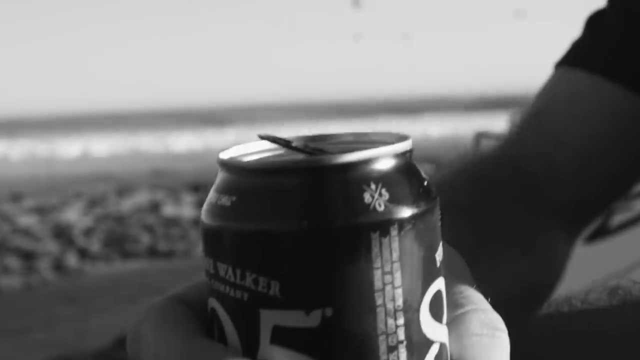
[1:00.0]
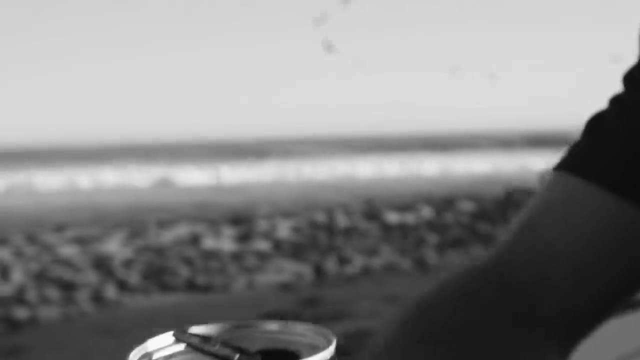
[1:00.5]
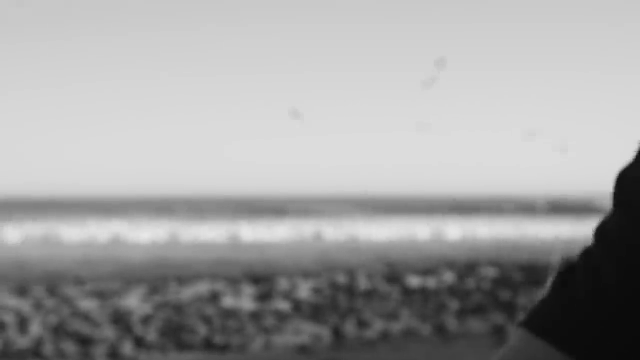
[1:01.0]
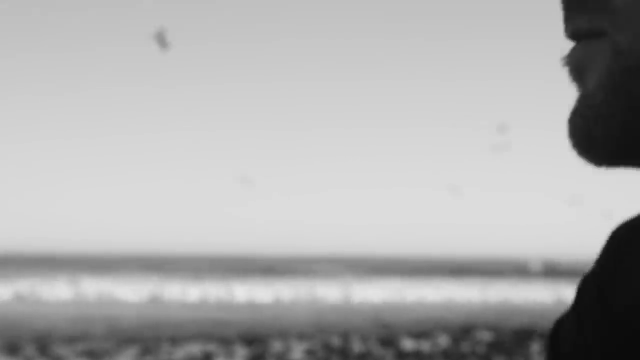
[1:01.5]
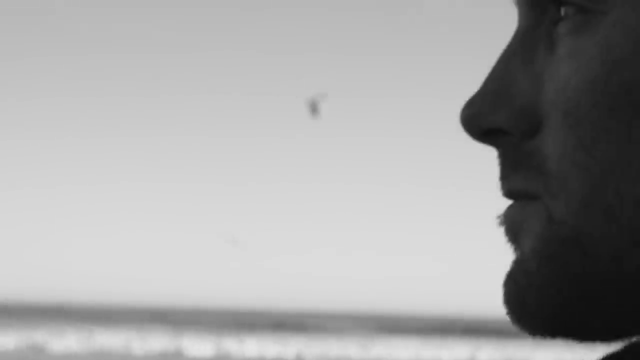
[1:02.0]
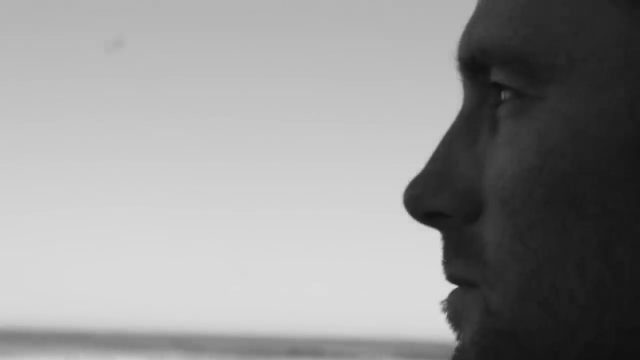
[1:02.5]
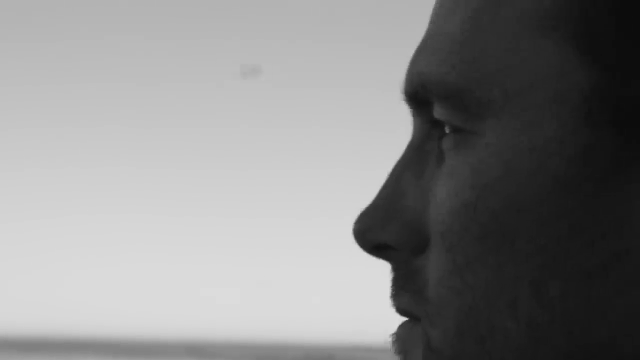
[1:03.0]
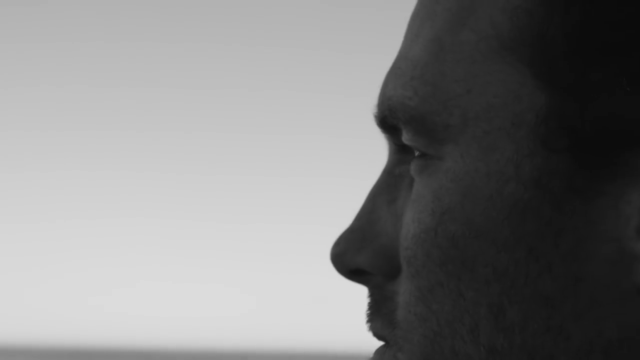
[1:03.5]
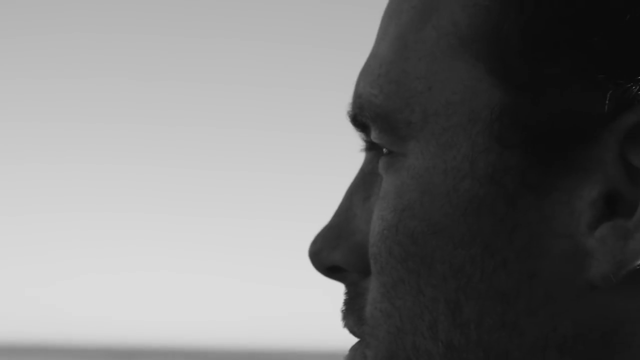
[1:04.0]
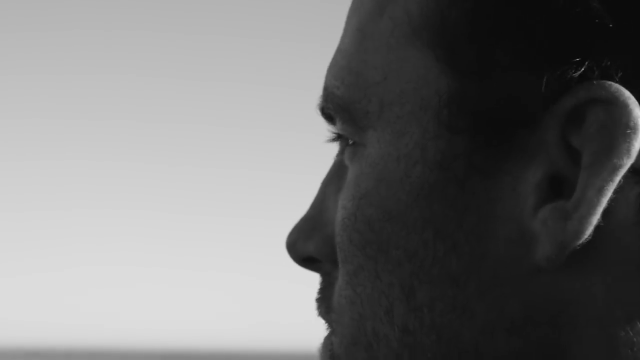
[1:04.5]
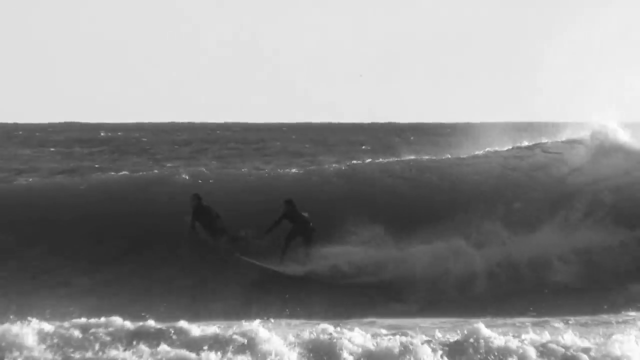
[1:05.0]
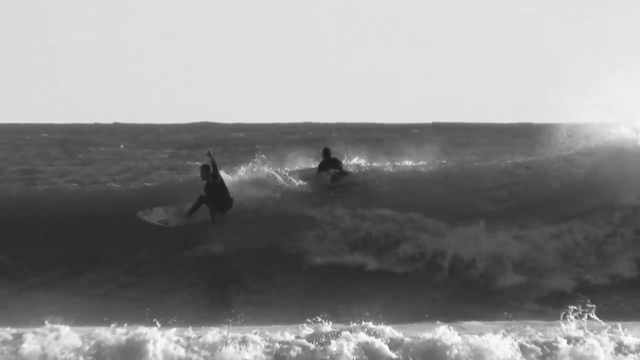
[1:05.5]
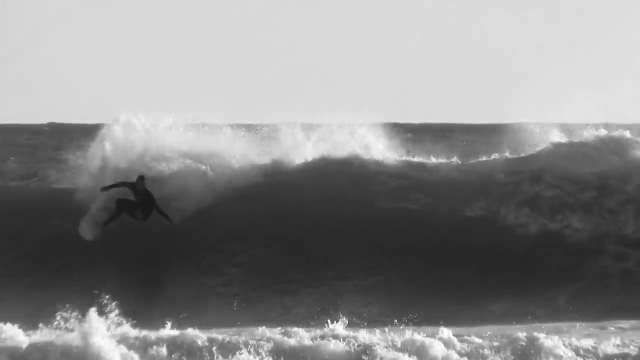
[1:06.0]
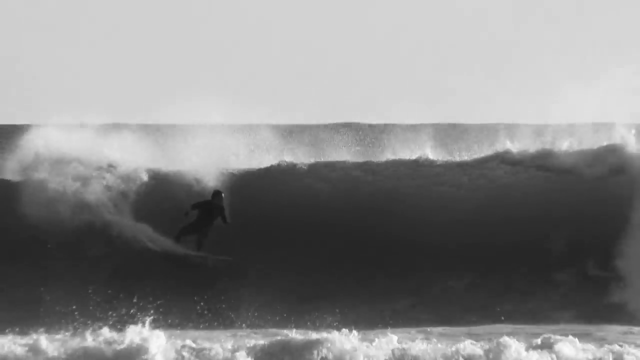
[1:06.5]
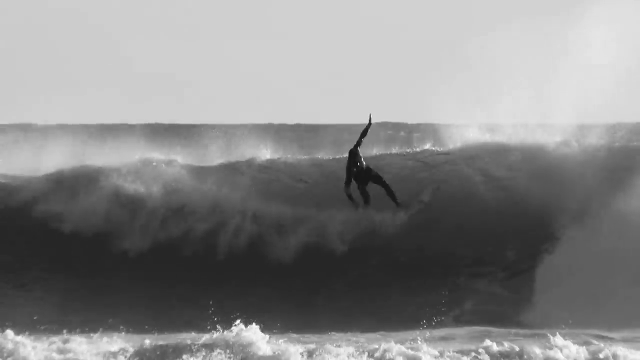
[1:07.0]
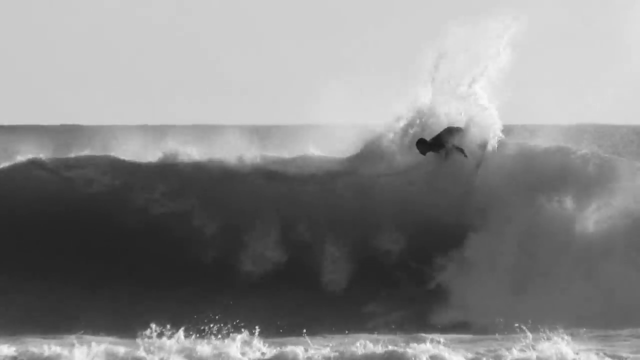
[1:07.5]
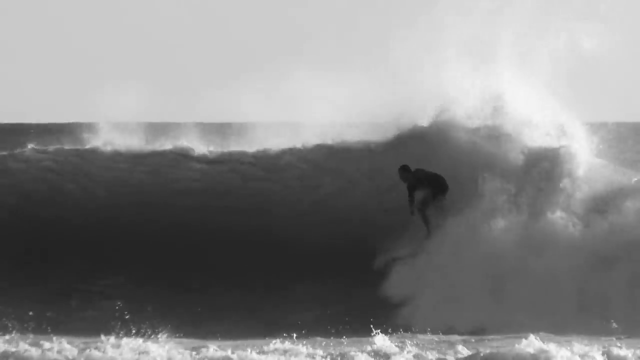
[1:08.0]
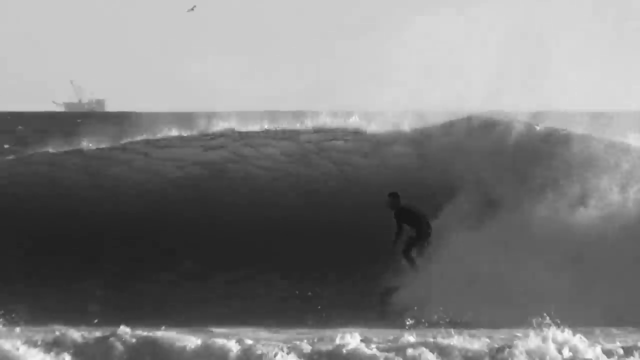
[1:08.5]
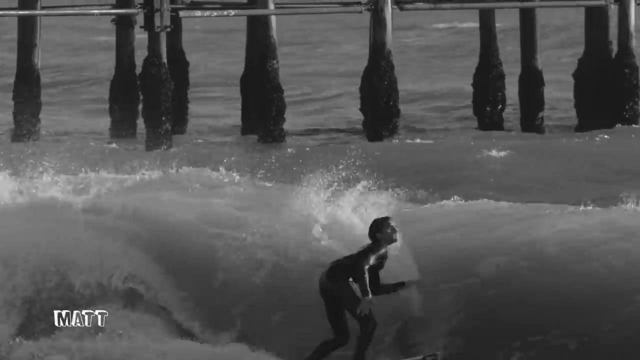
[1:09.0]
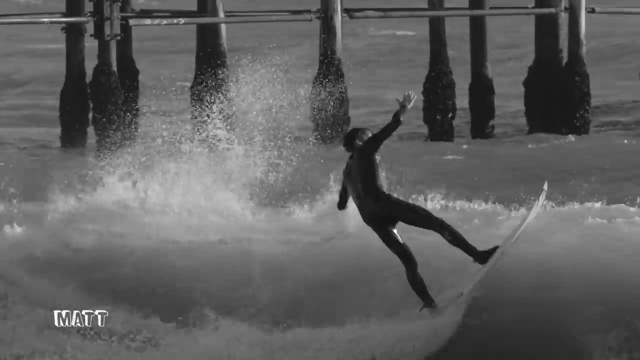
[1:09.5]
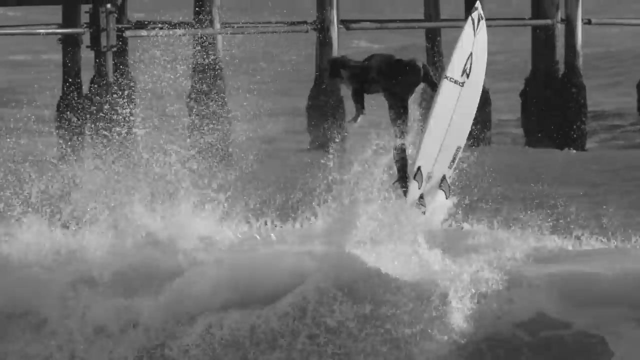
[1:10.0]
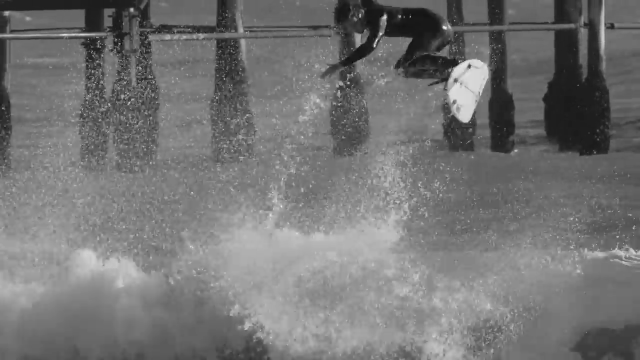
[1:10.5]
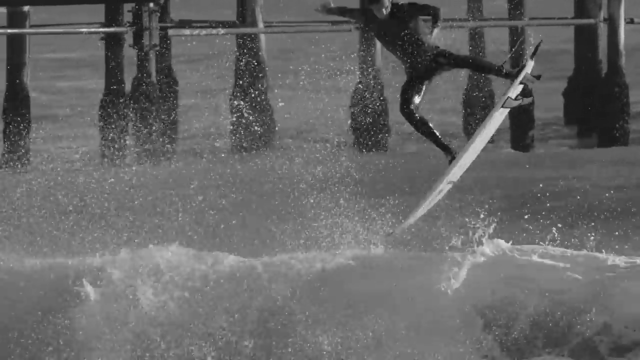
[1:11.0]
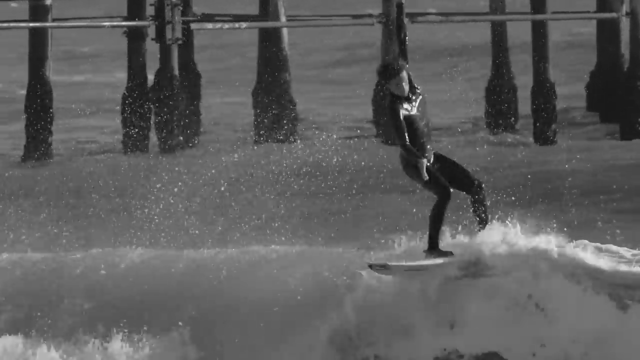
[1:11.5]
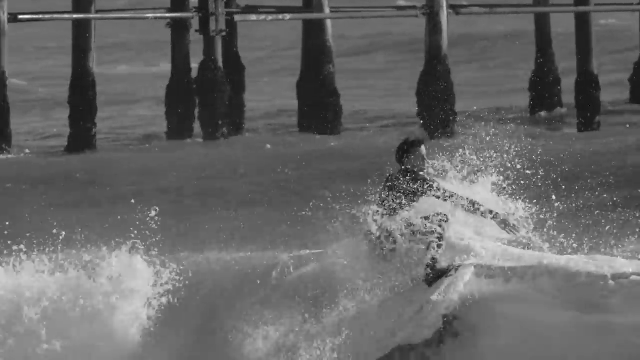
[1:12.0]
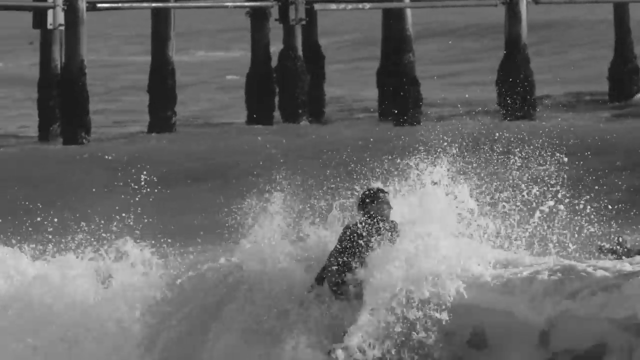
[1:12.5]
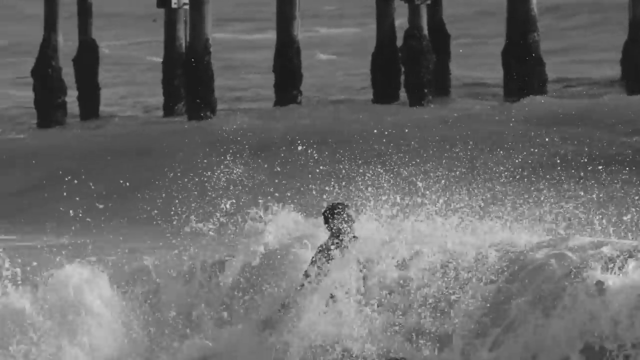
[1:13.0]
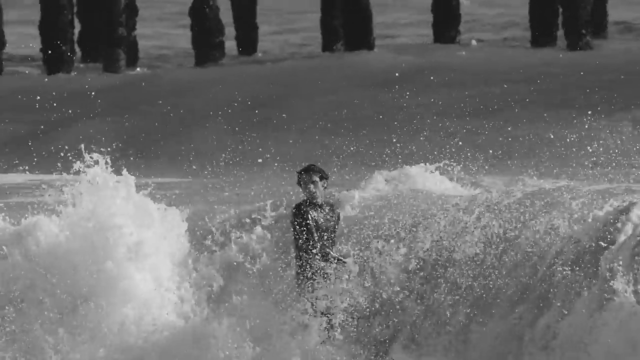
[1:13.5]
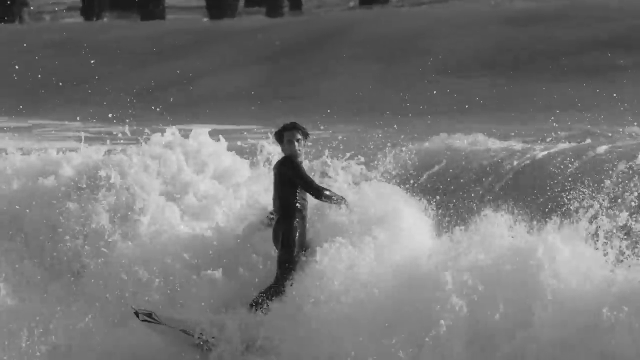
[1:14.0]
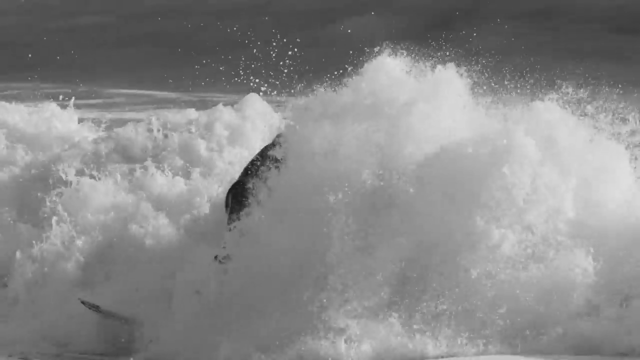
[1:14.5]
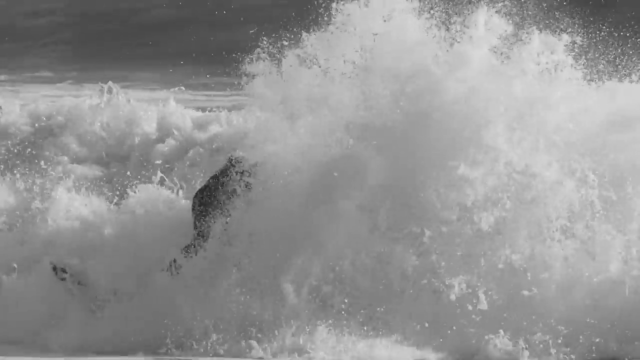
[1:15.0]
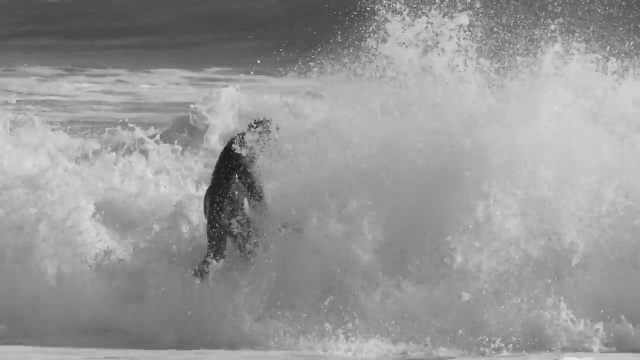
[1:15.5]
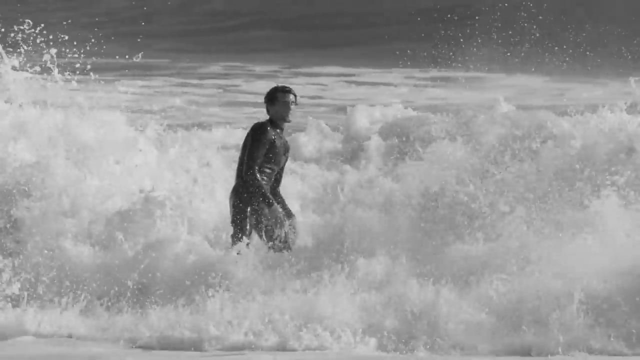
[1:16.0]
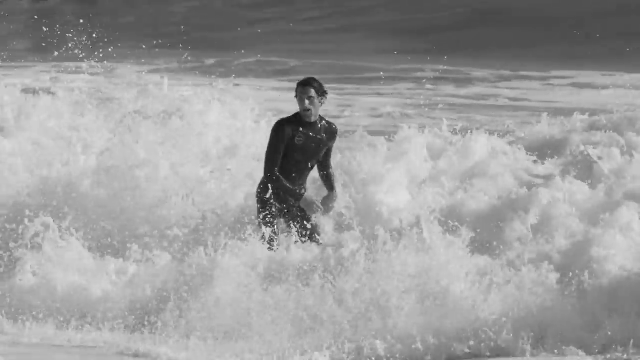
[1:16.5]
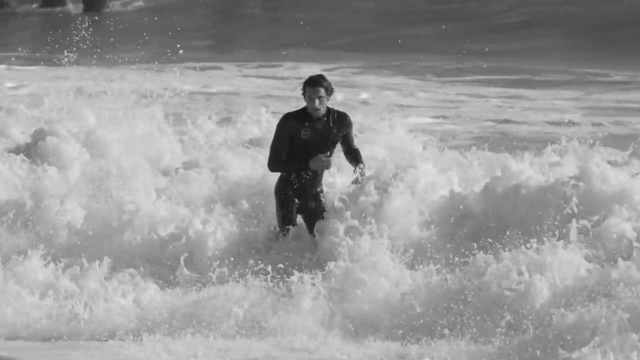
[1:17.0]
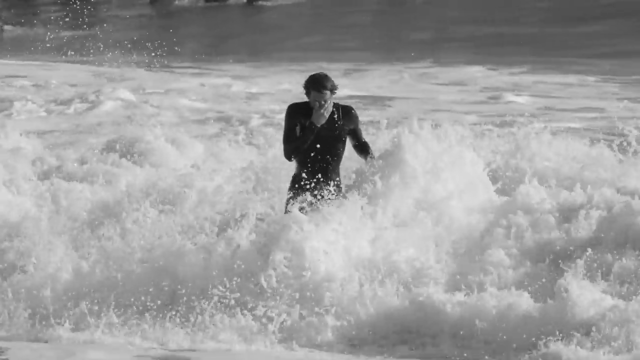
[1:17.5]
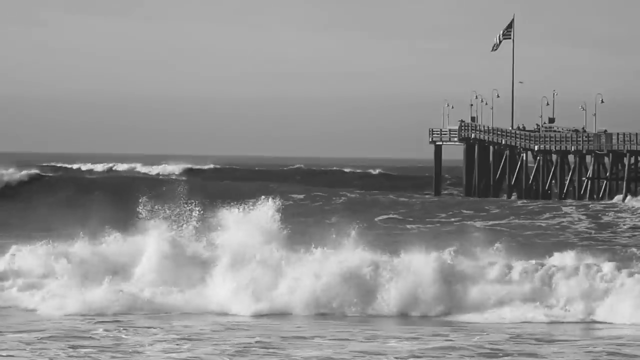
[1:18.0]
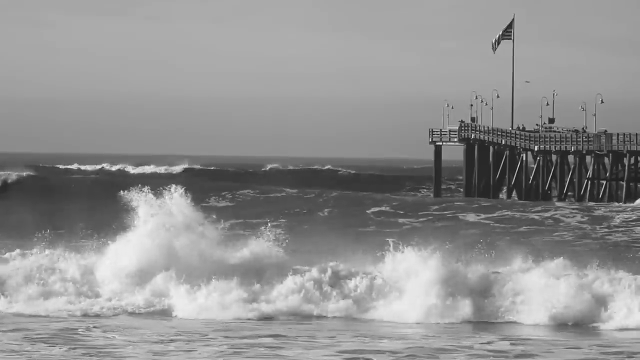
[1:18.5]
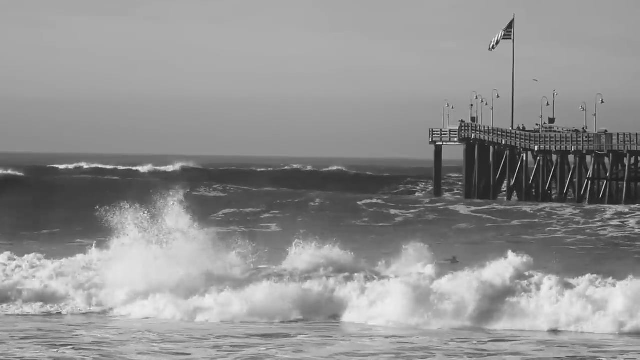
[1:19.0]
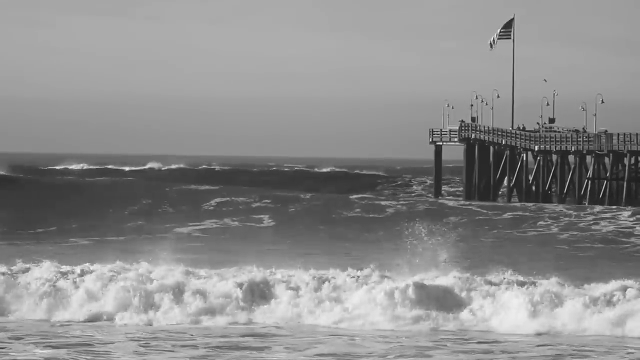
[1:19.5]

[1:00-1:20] A close-up shows a can of 805 beer with the beach behind it. The camera zooms away and slides away to reveal the side profile of a male who hasn't shaved in a few days, with seagulls flying behind him at the beach. A surfer cuts across the face and then the rim of a wave on his surfboard, cuts back to the left going the other direction, and flips around 180 again. A man rides a wave, rides up the curl and does a 180 flip that turns into pretty much a 270 or 360. Behind him are the poles that hold a pier upright. The man stands up and rides his surfboard back toward shore. Then the pier appears with an American flag near the end and big waves, like 15 feet, coming into shore and rushing through the poles that hold the pier up.